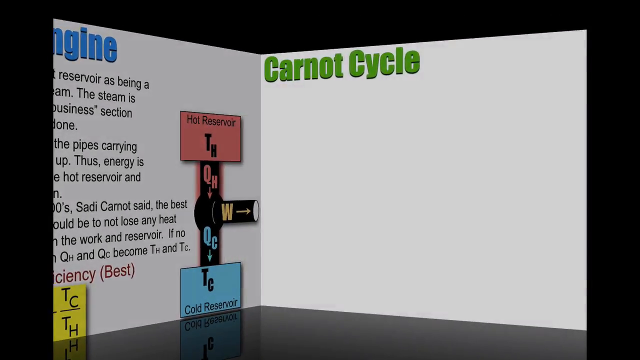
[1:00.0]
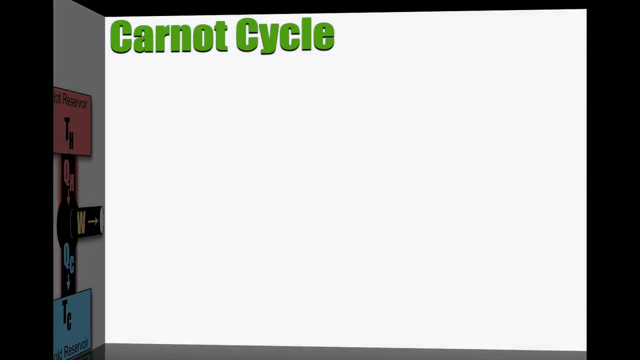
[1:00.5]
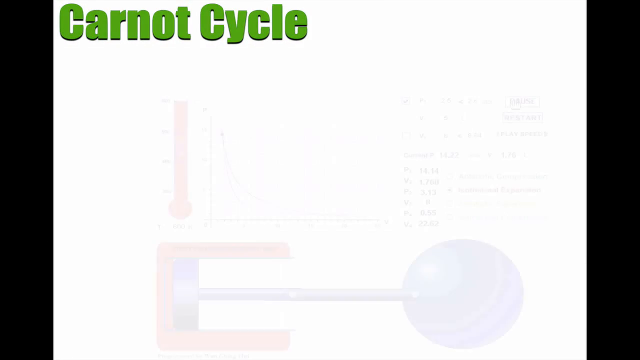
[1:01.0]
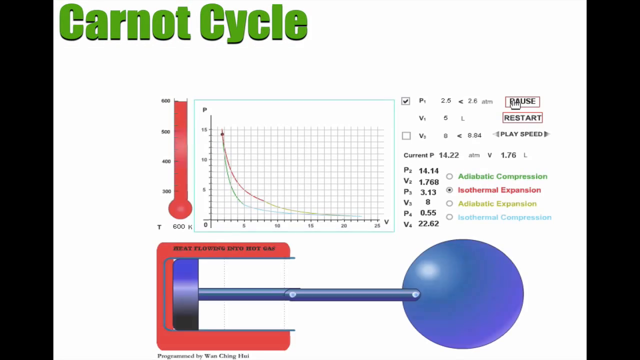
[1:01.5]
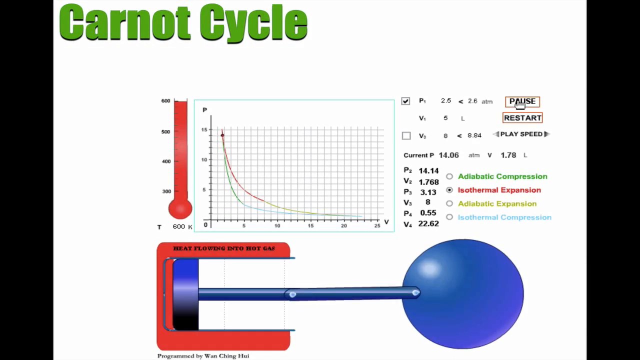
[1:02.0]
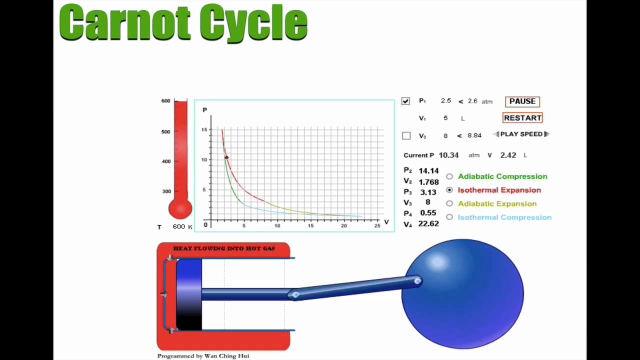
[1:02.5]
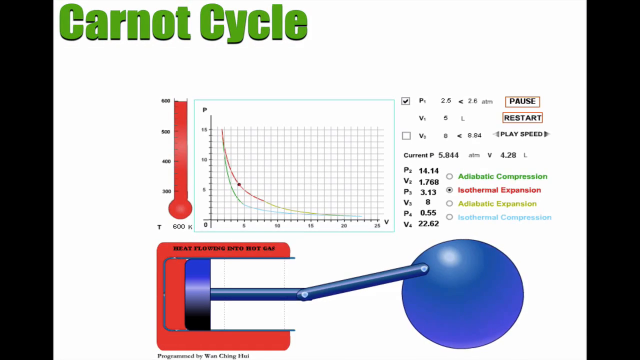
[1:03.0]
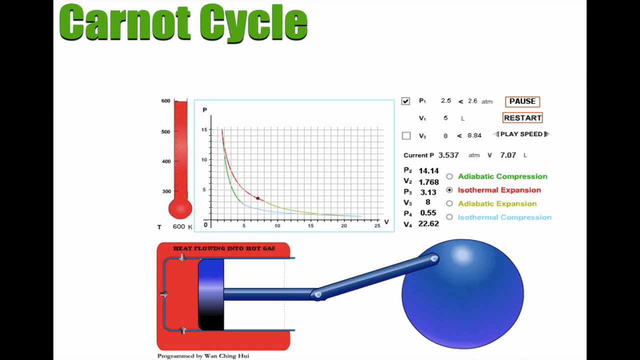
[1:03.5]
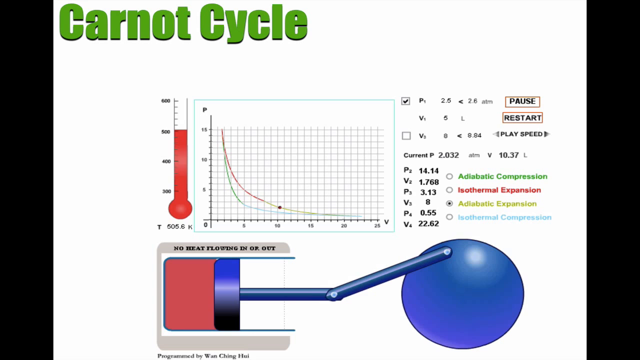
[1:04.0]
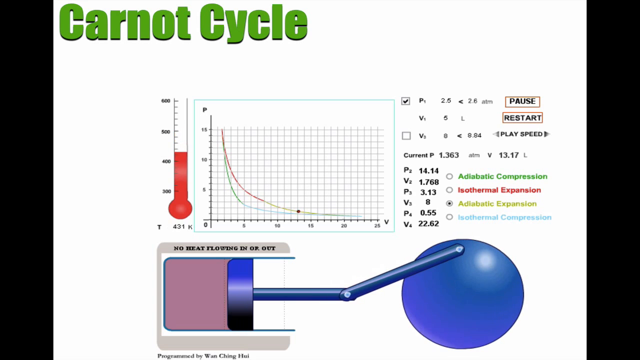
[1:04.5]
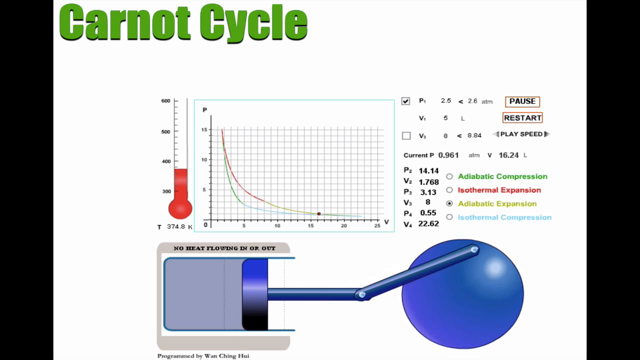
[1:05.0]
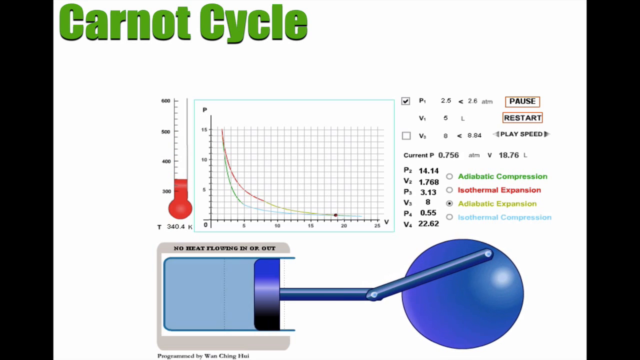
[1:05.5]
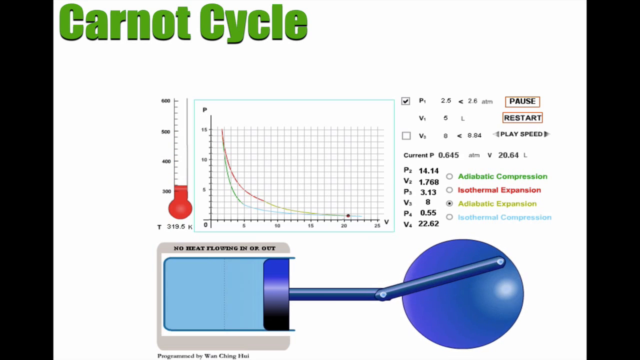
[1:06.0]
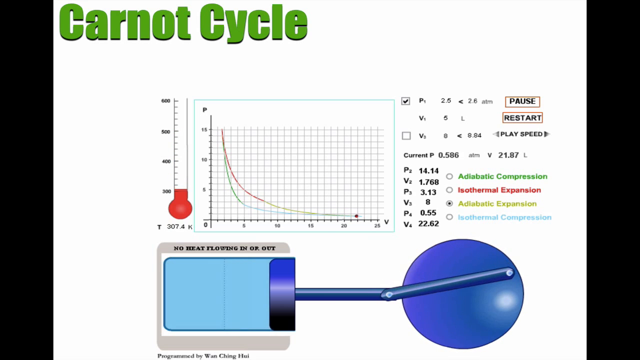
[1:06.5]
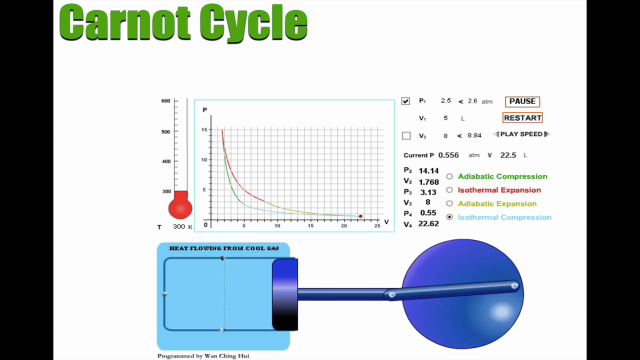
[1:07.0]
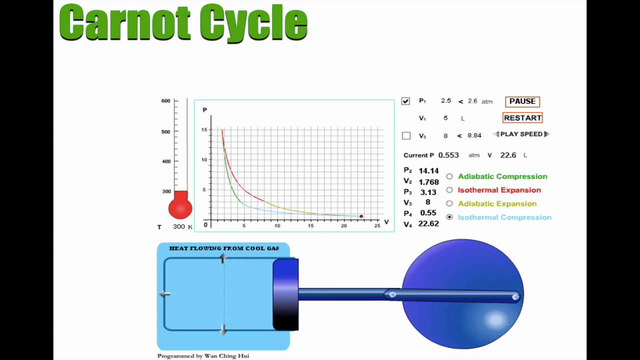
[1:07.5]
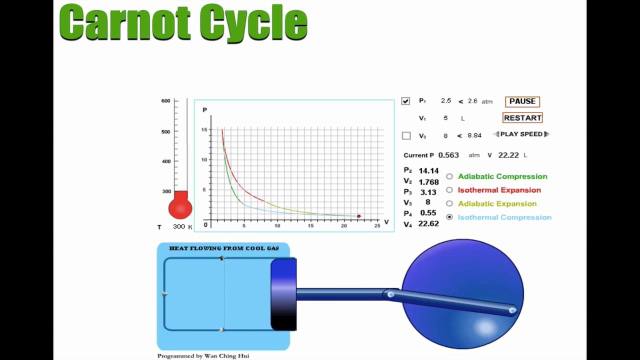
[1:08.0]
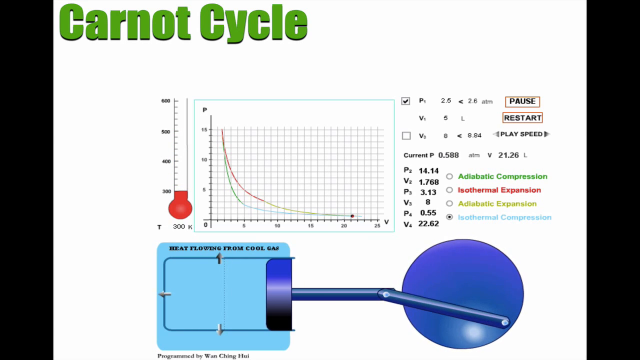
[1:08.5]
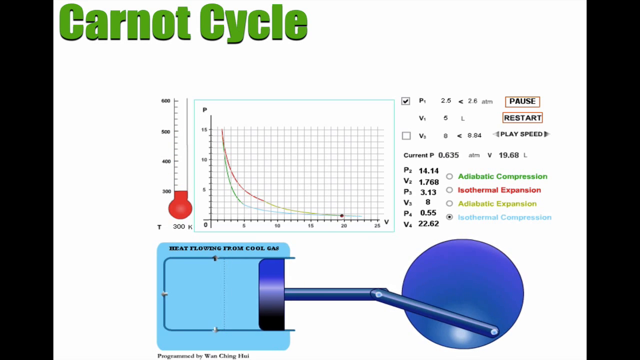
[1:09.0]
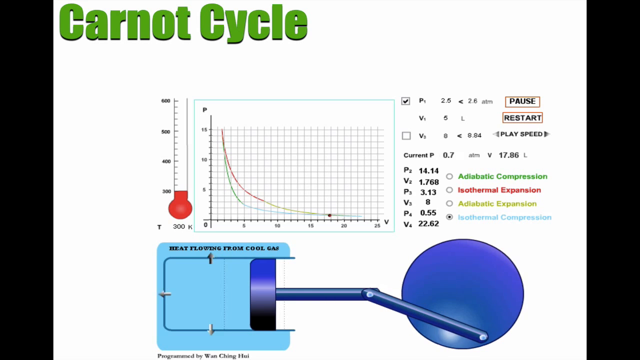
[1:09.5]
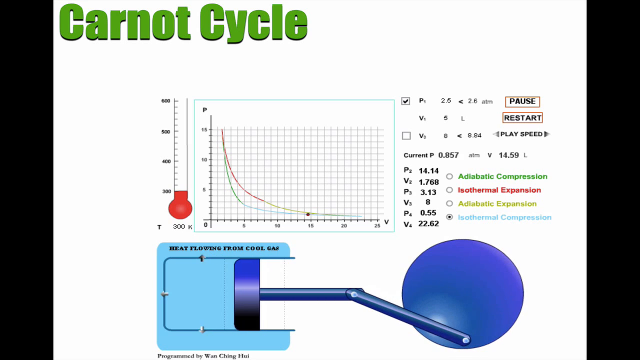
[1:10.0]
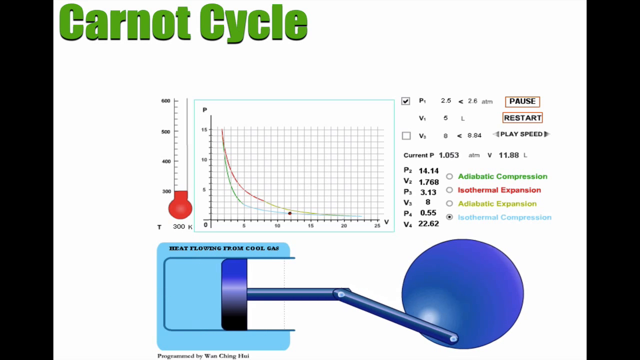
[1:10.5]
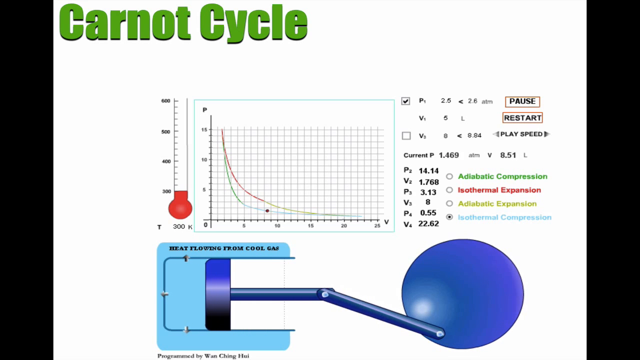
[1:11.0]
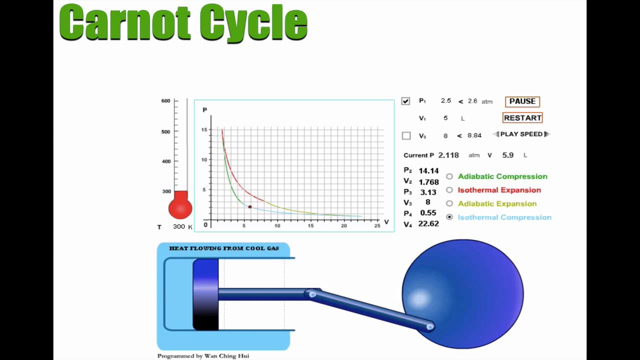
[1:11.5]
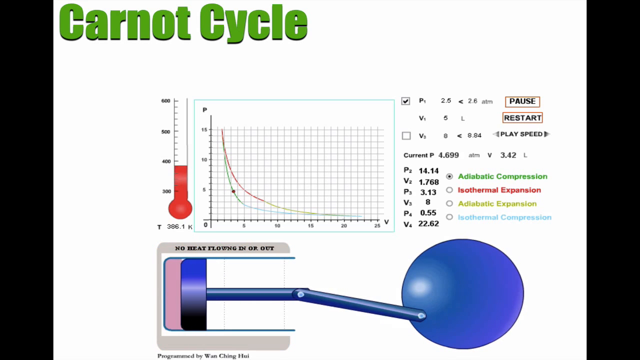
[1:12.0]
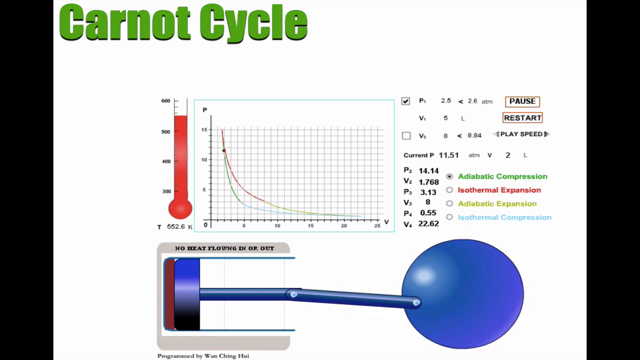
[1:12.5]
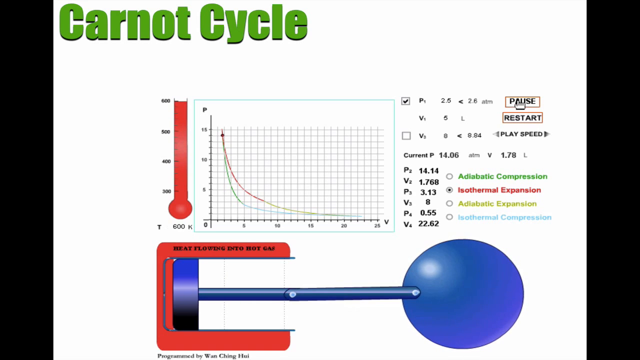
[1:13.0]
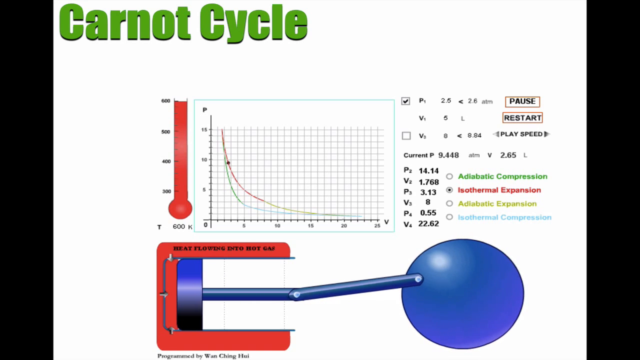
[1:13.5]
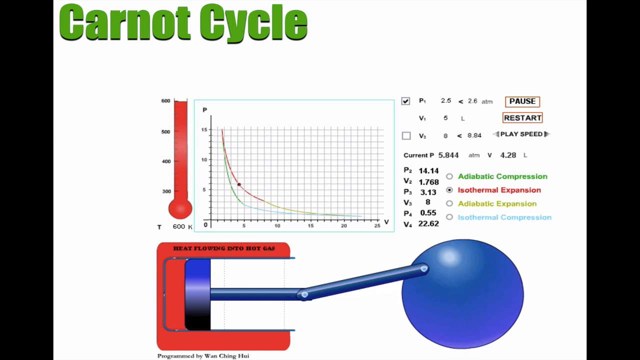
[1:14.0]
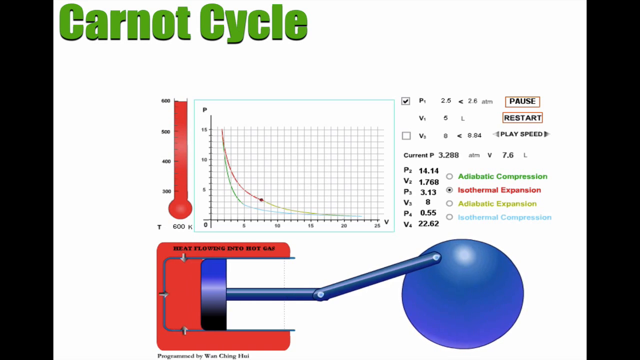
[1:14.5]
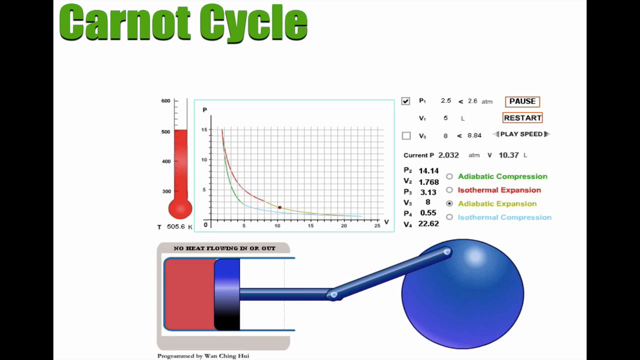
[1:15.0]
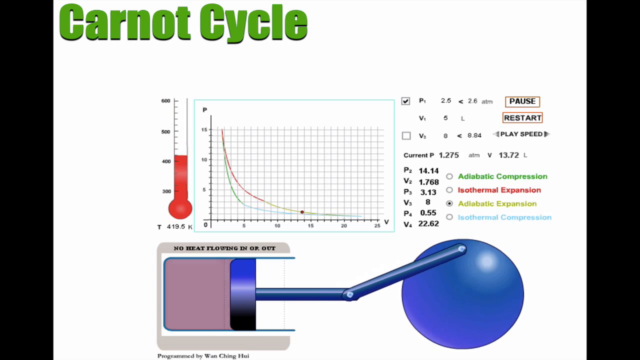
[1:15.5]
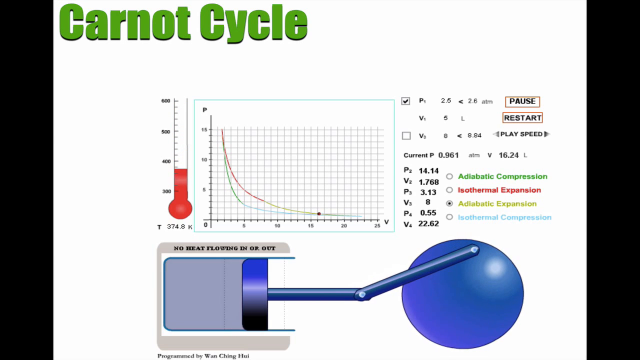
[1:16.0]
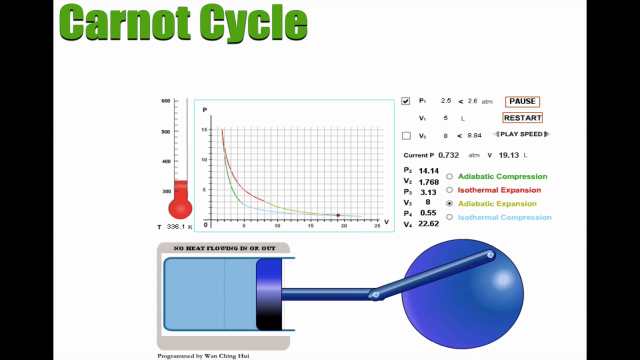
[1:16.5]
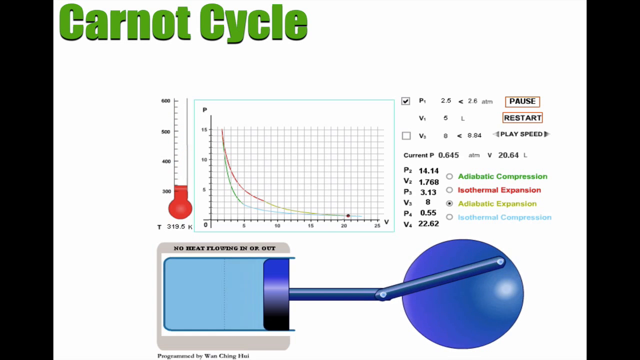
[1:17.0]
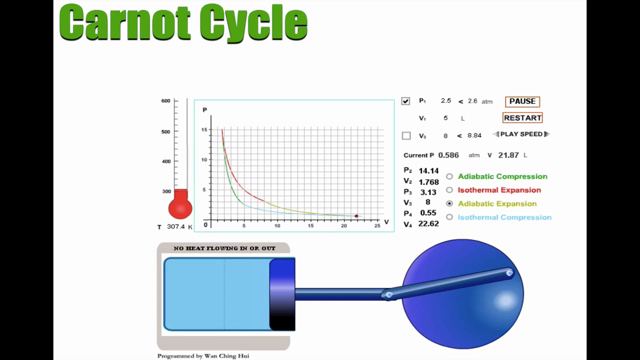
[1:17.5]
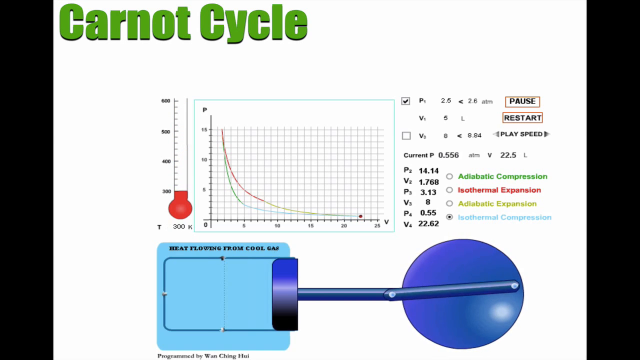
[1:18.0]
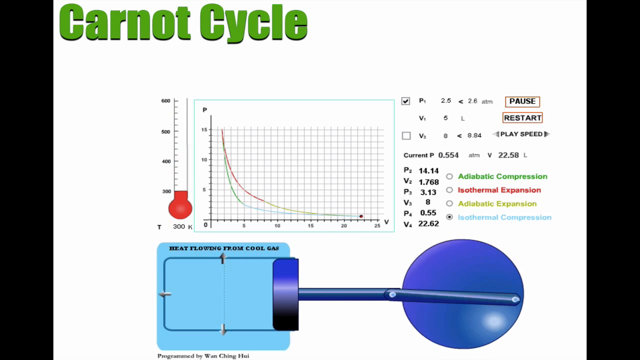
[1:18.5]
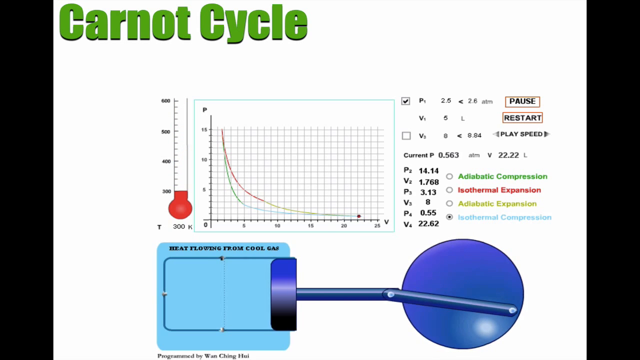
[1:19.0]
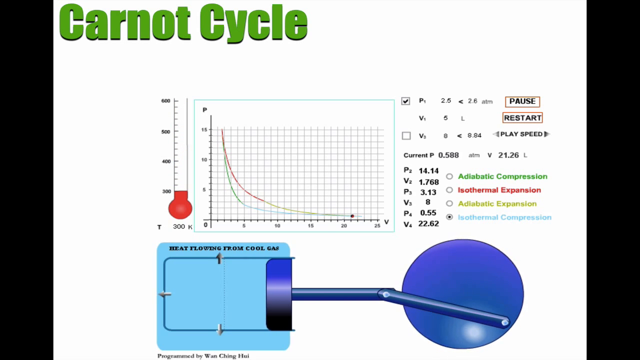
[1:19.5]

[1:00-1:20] During the transition the screen looks half and half: half of the previous screen appears to be on the diagonal, leaving to the left, while "Carnot cycle" appears on a completely white base. The title is in large, luminous lime green text in the top left. Under it is a graph with a thermostat symbol on the vertical axis, which appears to read from 300 to 600. Its lines lead down from between zero and two on the vertical axis and become horizontal by the end. To the right are various symbols and text labels: "adiabatic compression" in green, "isothermal expansion" in red, "adiabatic expansion" in mustard yellow, and "isothermal compression" in pale blue. Below is a diagram with something that looks a bit like a blue ball cock pointing off to the right, coming out of a container with a vertical barrier and horizontals on the top and bottom. Text at the bottom refers to heat flowing into the gas. The thermostat gauge, a red filling, goes down, a point on the horizontal of the graph heads off to the right, and measurements above the four text labels on the right change. The colors of the diagram change: the container becomes blue, its inside the same color as its three sides, and the base, stem and circular ball cock shape change from red to blue. The device then recedes back towards its starting position.